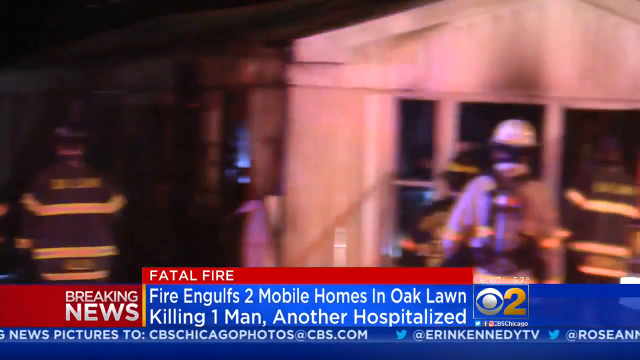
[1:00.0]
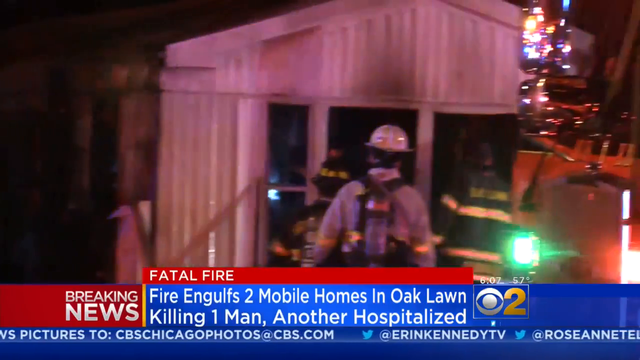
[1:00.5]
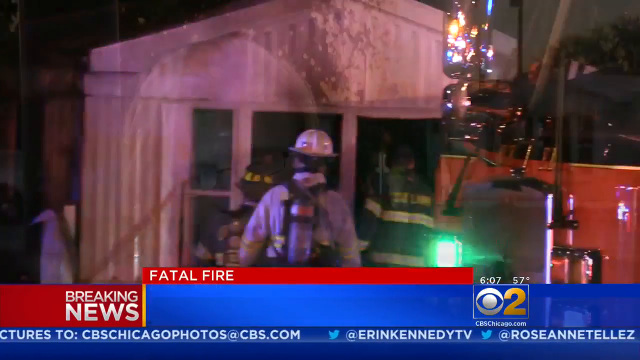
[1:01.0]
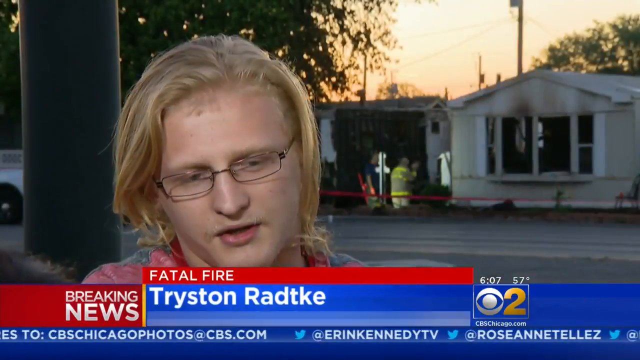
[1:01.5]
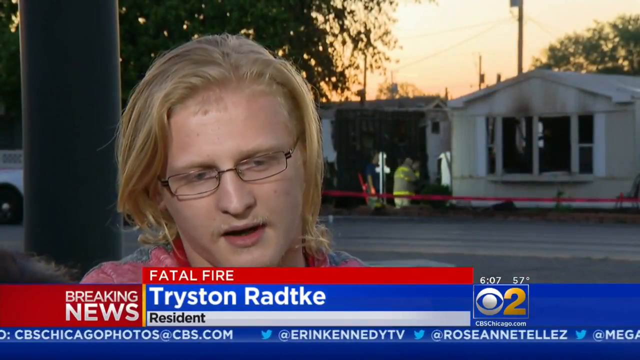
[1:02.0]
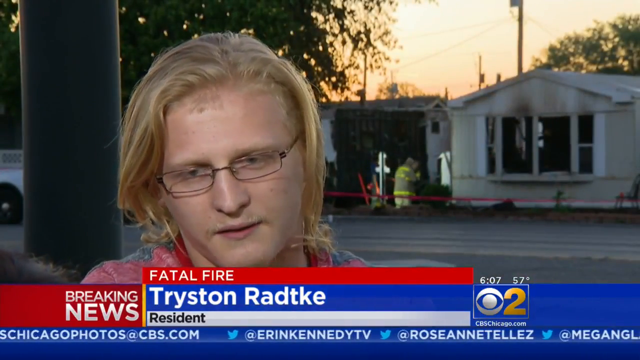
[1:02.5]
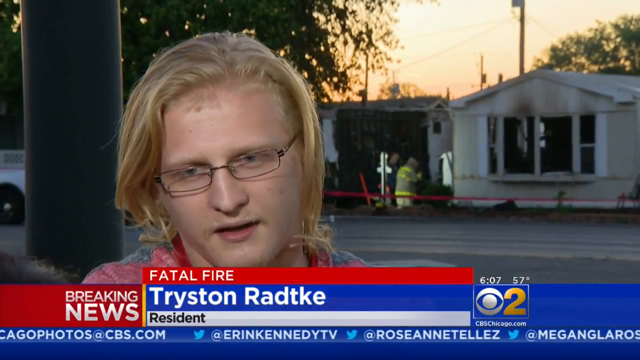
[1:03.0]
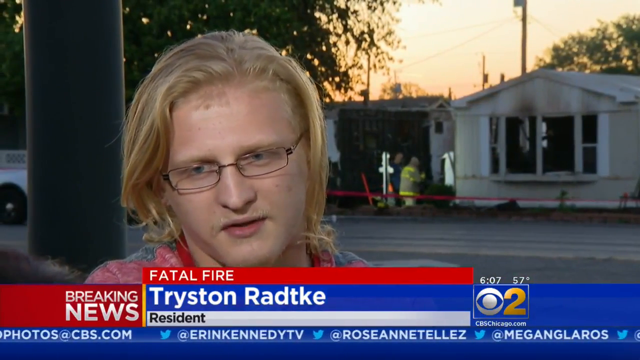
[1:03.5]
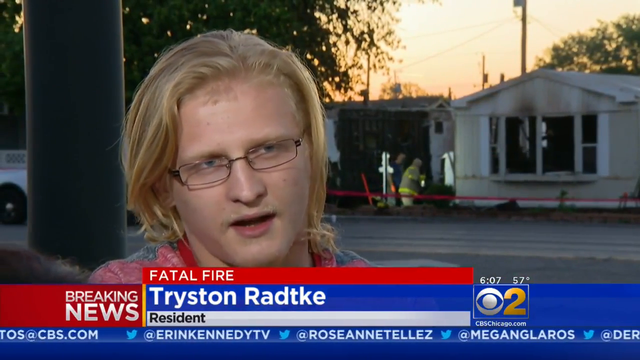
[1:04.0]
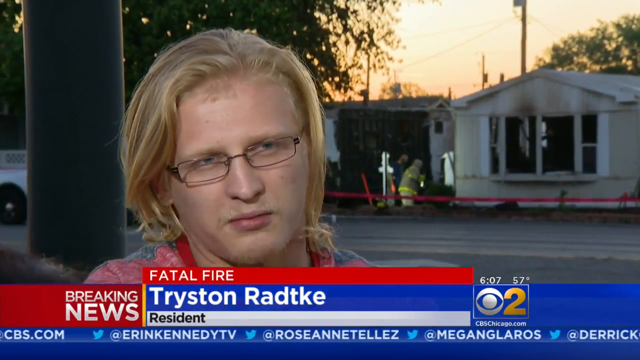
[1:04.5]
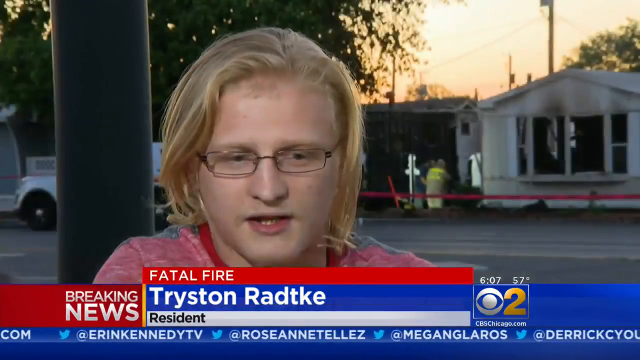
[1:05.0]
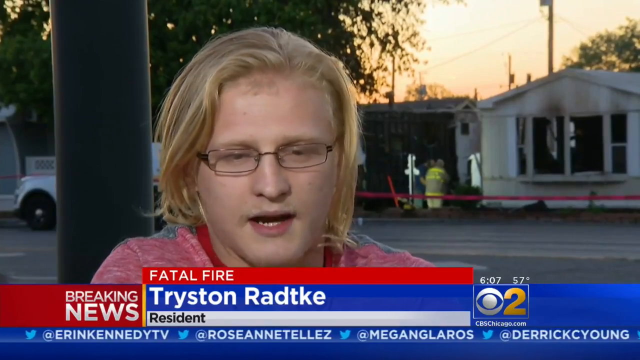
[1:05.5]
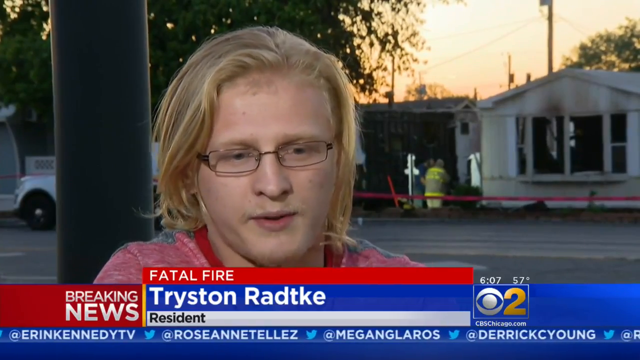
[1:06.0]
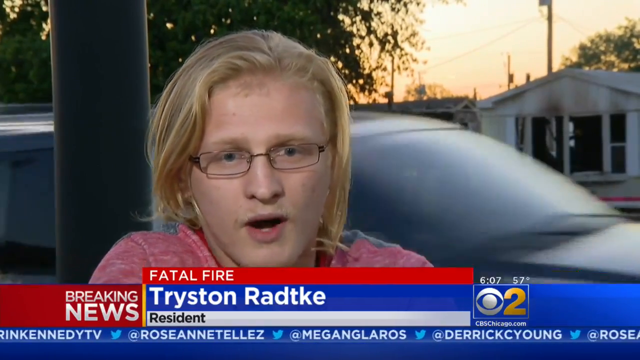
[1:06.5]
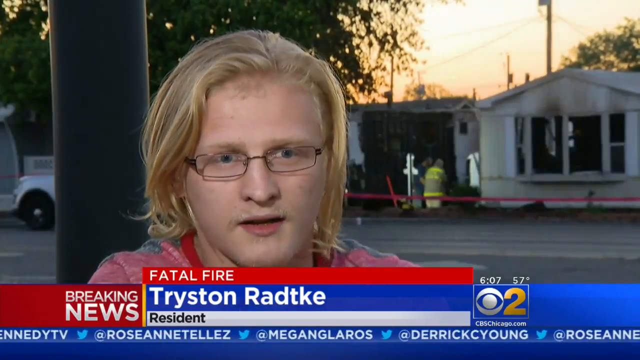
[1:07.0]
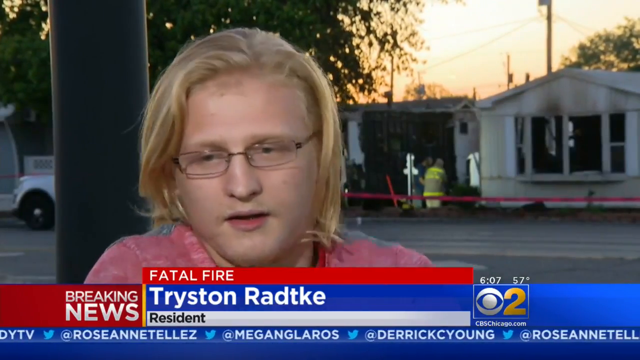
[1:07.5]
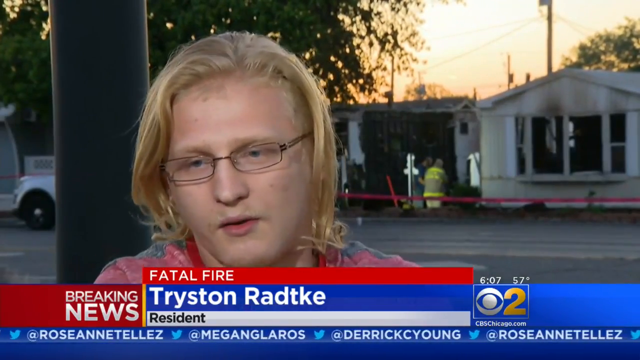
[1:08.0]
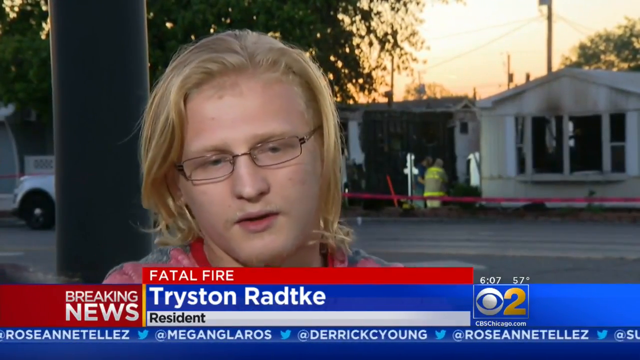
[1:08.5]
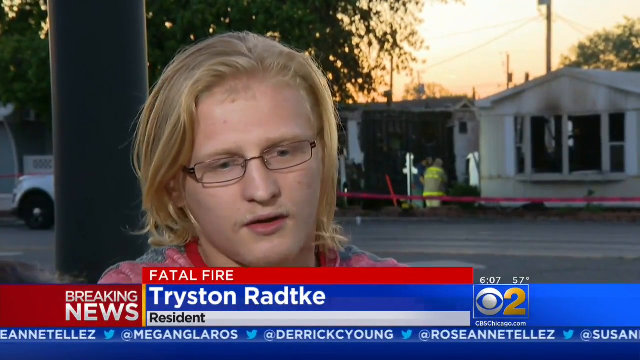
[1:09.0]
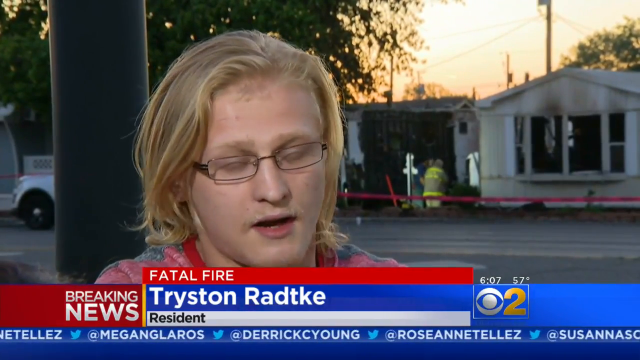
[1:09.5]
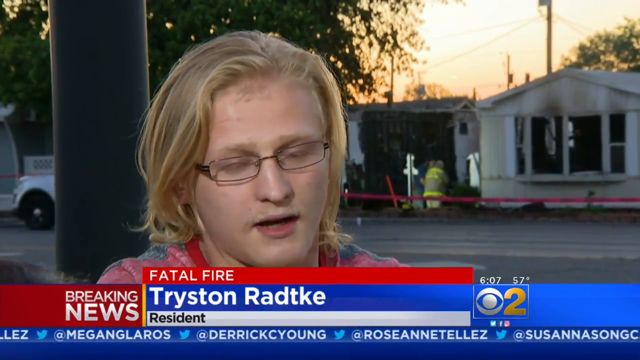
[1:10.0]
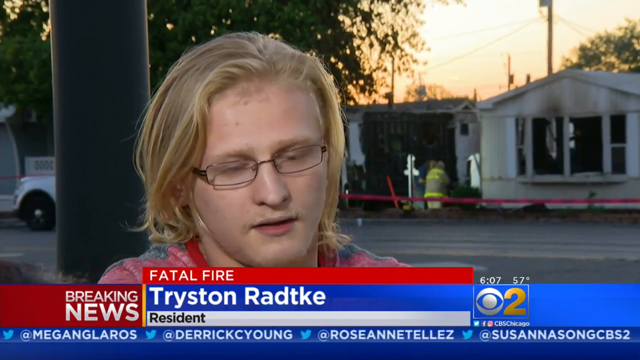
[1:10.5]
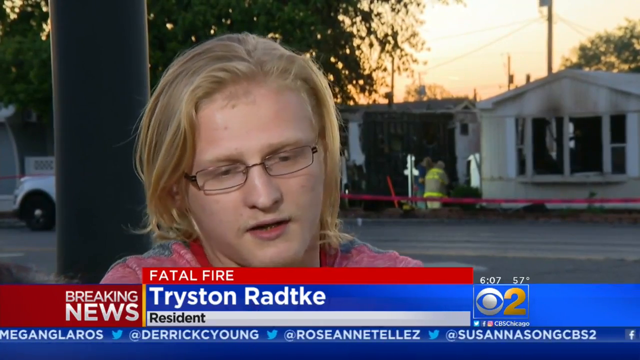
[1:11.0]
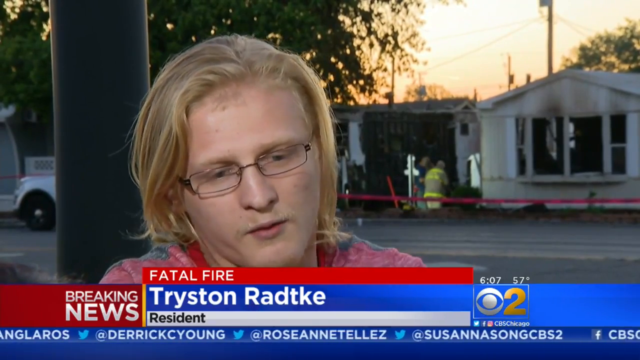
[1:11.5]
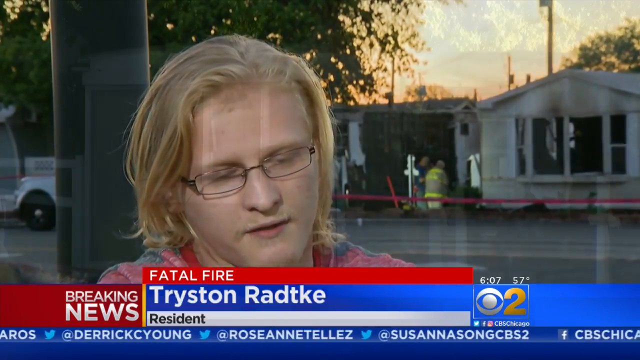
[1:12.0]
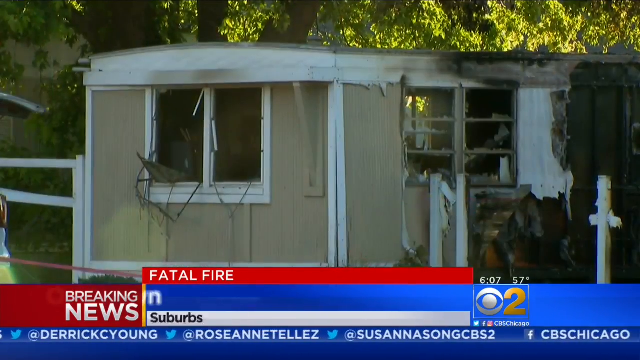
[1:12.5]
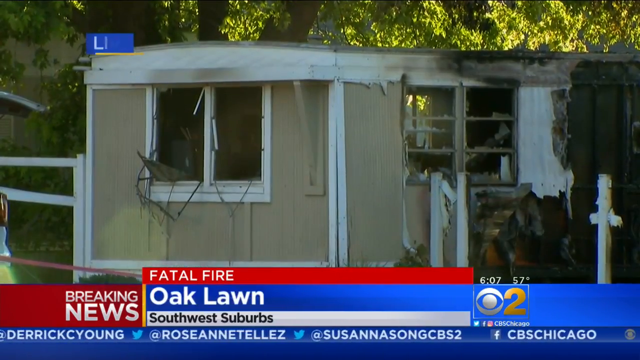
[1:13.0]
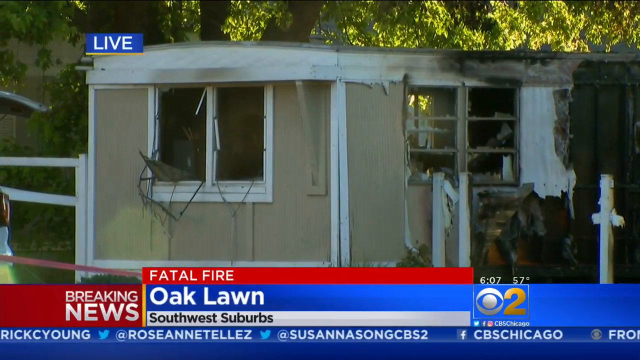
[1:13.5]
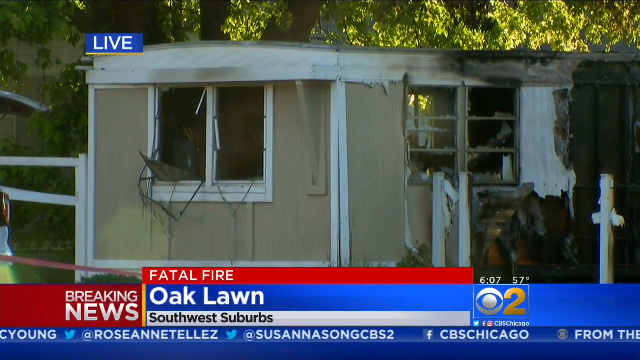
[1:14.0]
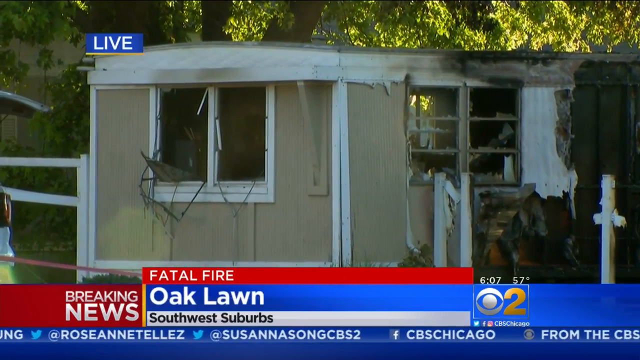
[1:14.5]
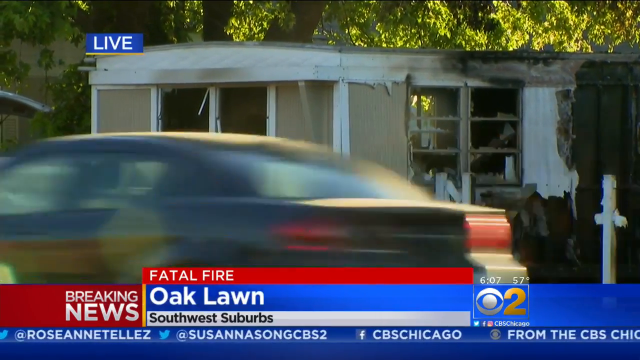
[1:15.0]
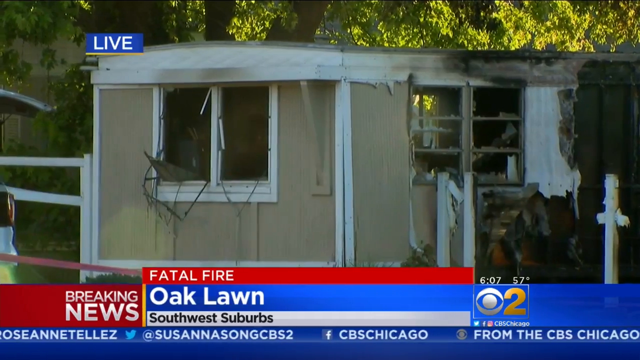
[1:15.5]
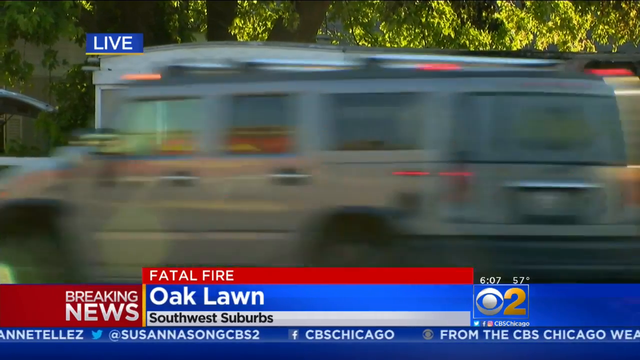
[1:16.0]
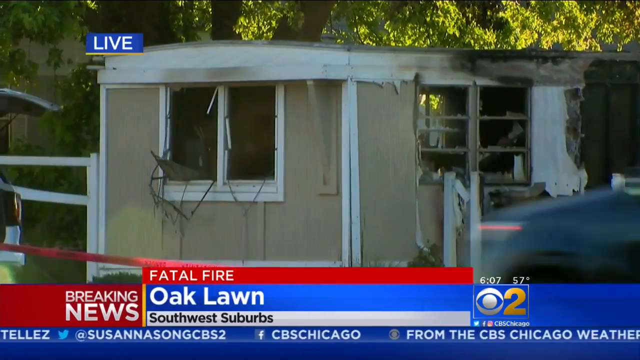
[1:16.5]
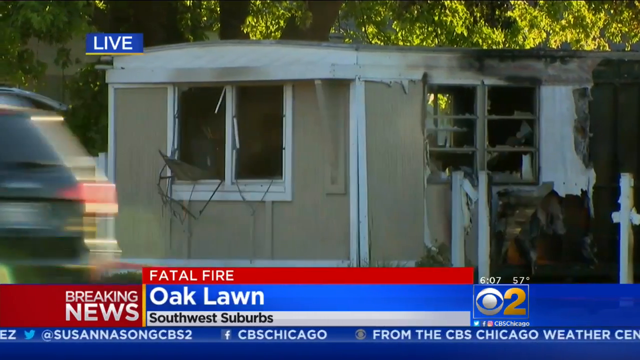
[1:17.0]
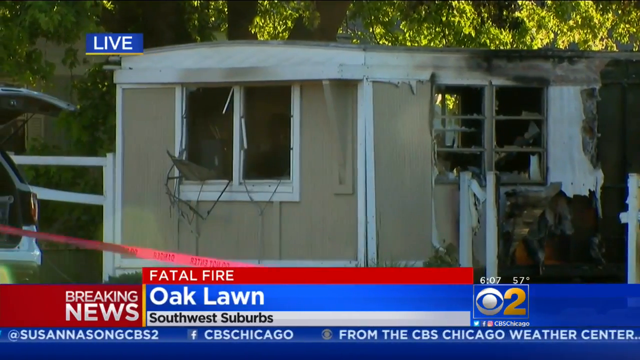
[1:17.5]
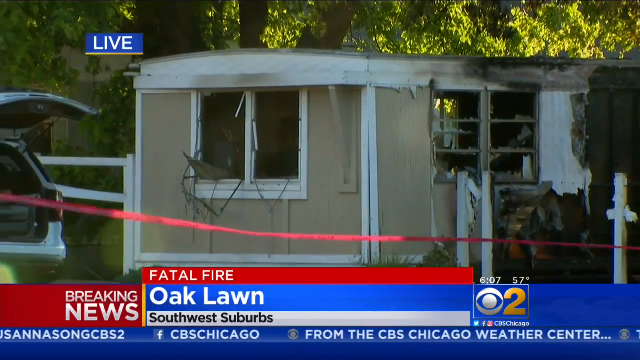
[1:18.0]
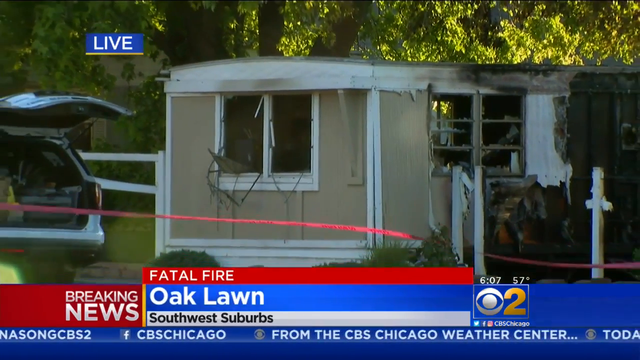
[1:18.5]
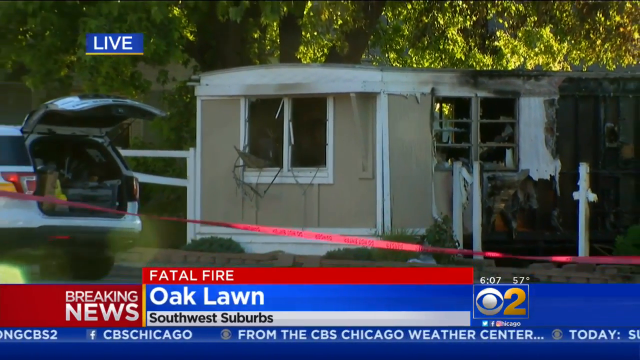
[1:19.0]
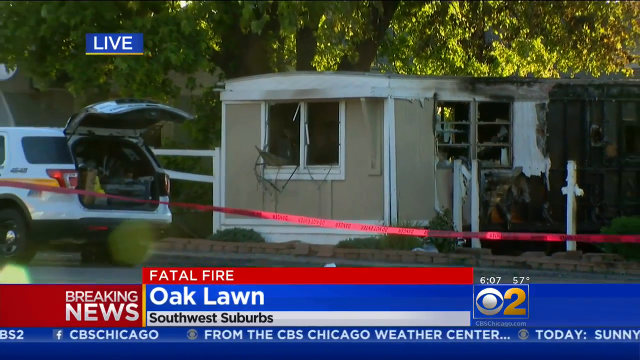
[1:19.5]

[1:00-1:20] A young man is positioned on the left side of the screen. He has quite long blond hair and wears glasses with rectangular lenses and a dark, rather thin frame, along with a pink shirt with a red collar. Behind him is a road, with a van visible in the left part of the frame, and a building with light-colored walls in the background. In the lower part of the frame there are red and blue graphics with black and white writing inside. Then a shot shows the building behind him: it has windows with white frames, and on the ground floor a red rope moves in the wind. Behind it are rather tall trees with very bright green leaves. At the left edge of the screen there is a car with its bonnet open.